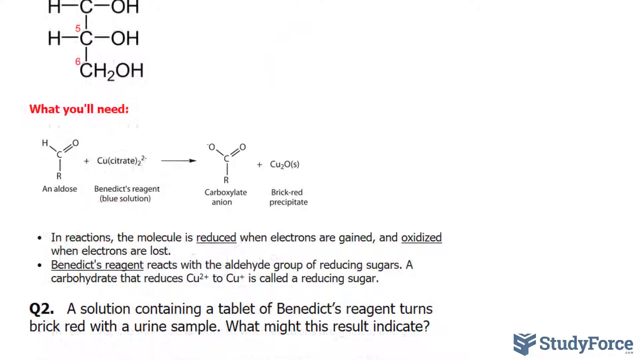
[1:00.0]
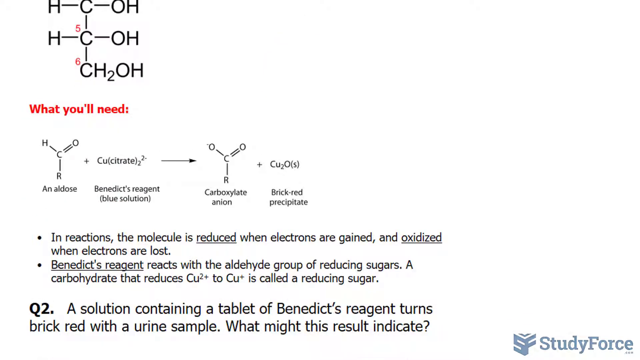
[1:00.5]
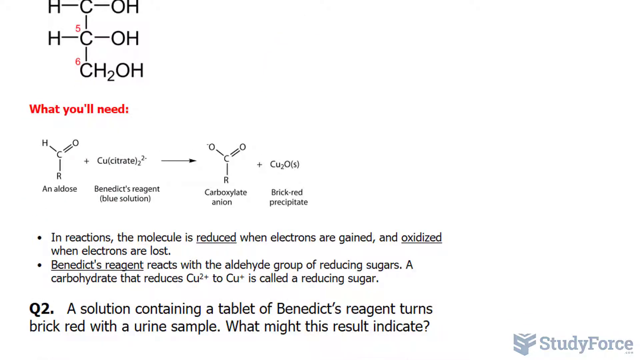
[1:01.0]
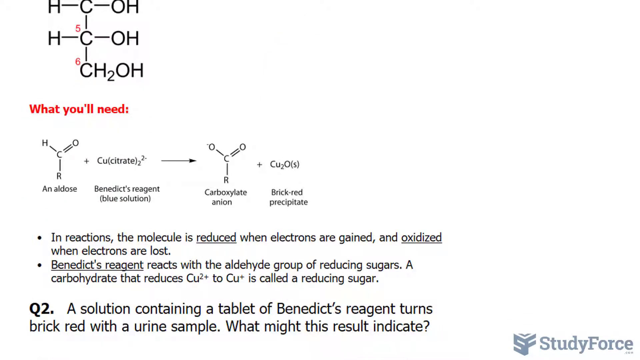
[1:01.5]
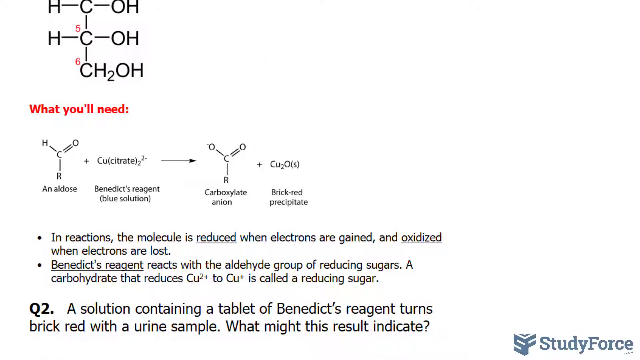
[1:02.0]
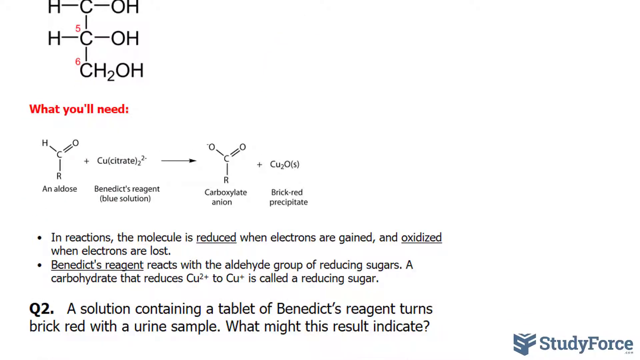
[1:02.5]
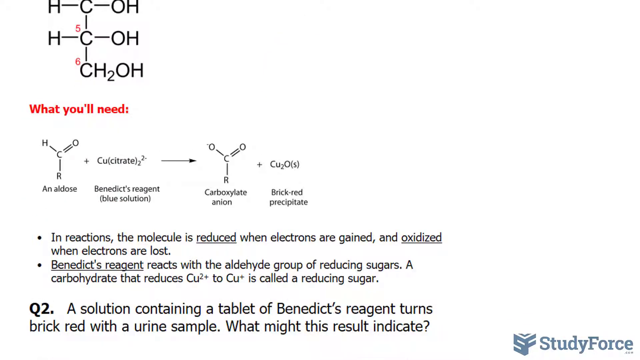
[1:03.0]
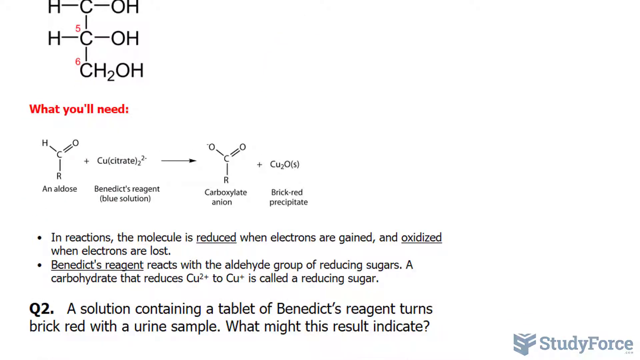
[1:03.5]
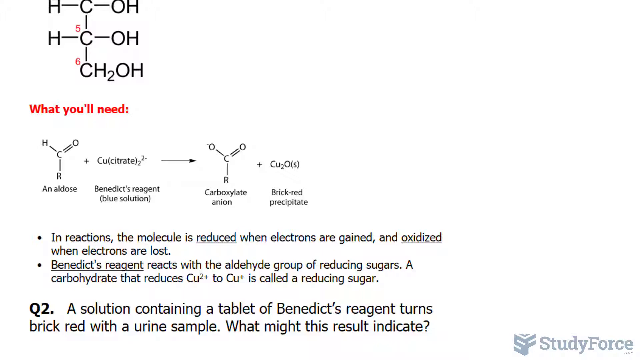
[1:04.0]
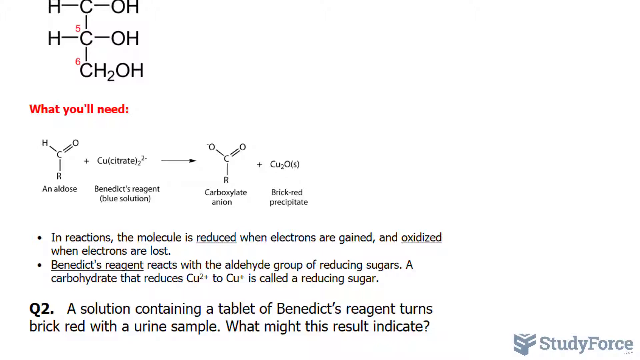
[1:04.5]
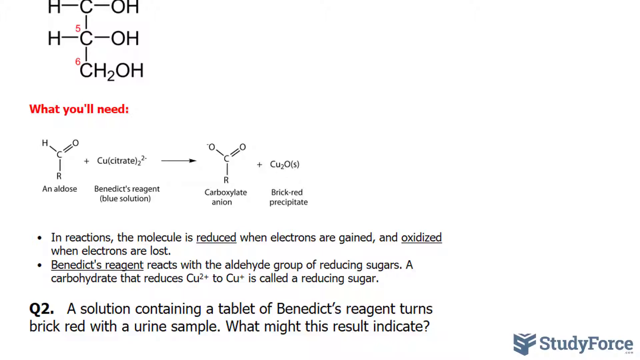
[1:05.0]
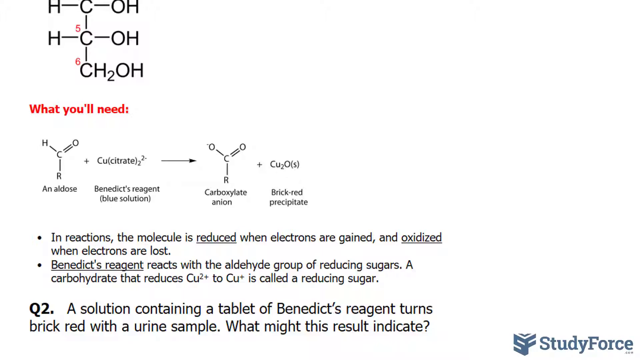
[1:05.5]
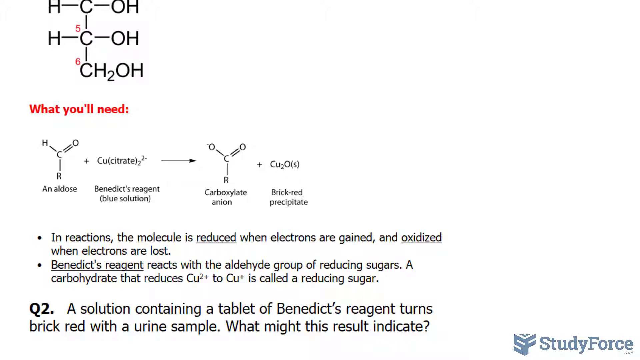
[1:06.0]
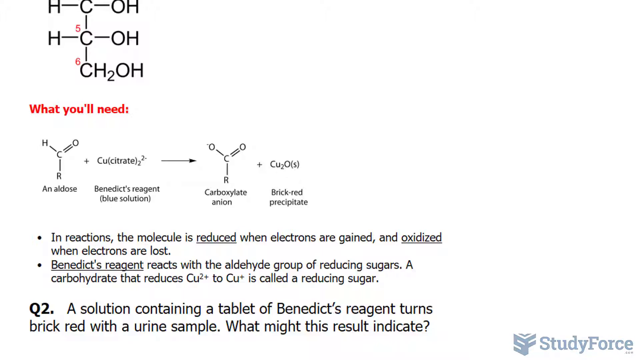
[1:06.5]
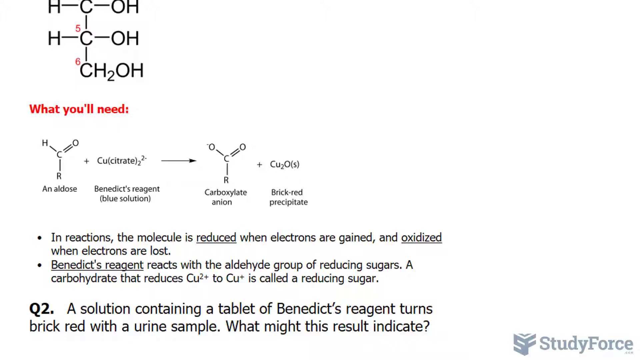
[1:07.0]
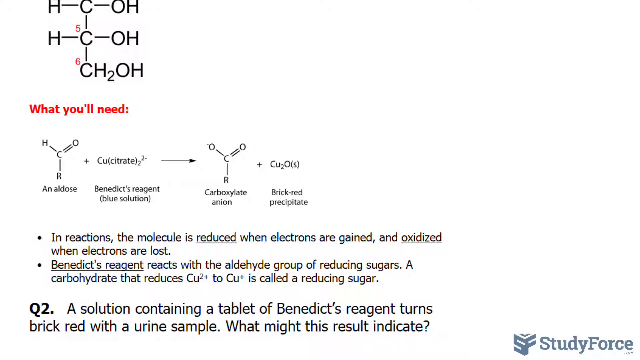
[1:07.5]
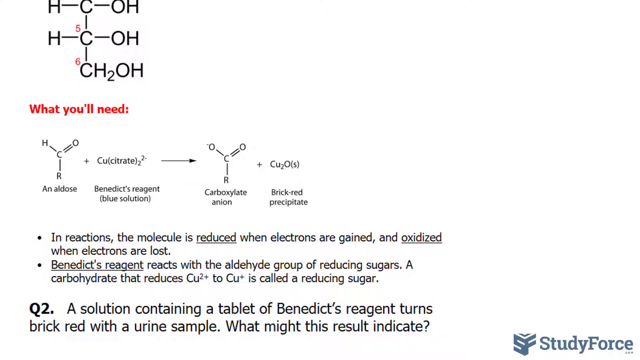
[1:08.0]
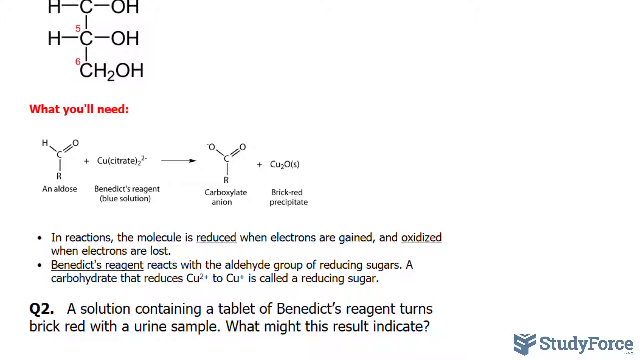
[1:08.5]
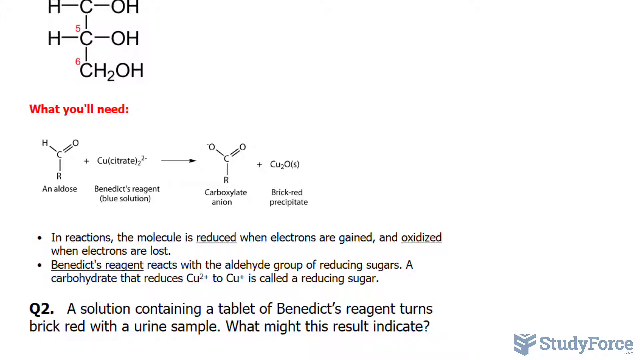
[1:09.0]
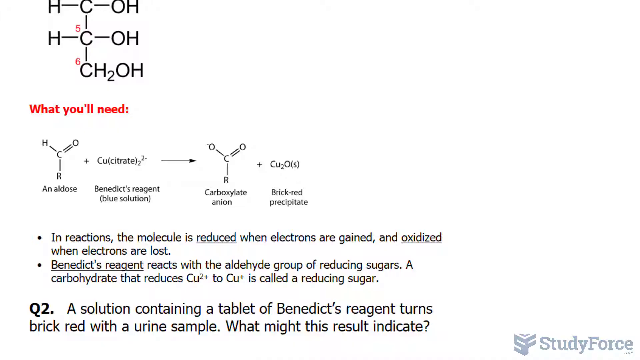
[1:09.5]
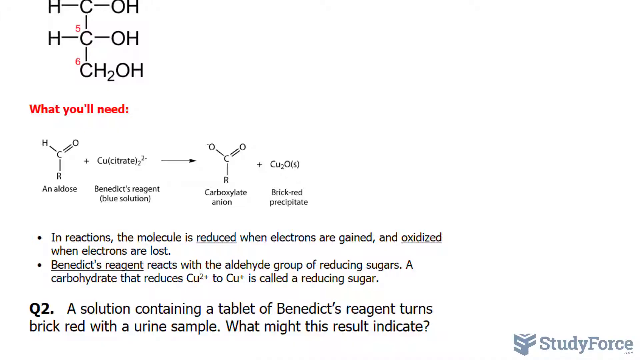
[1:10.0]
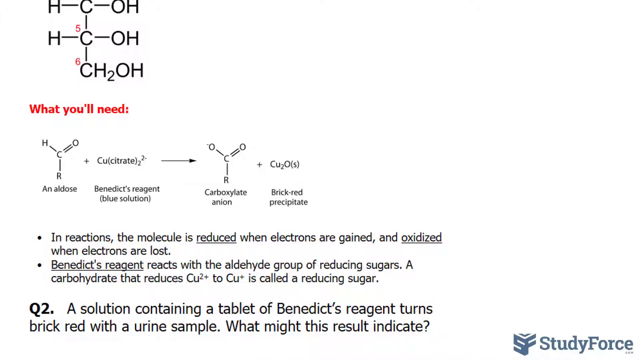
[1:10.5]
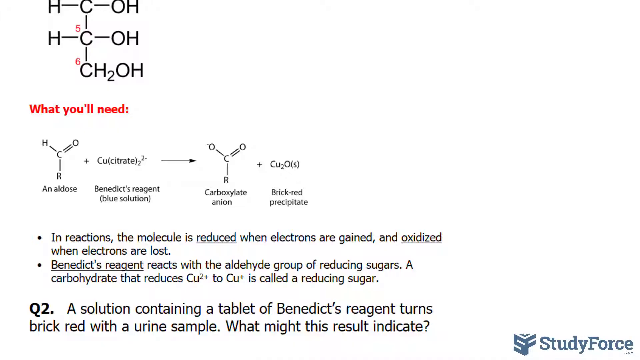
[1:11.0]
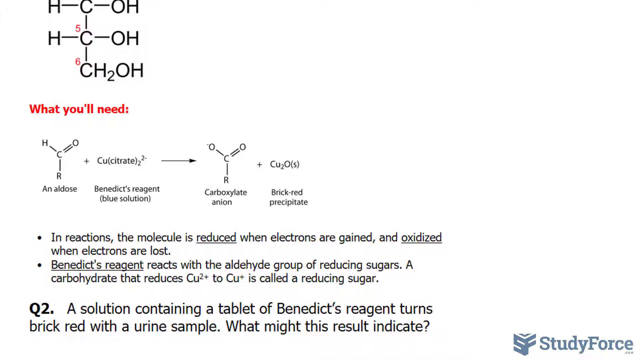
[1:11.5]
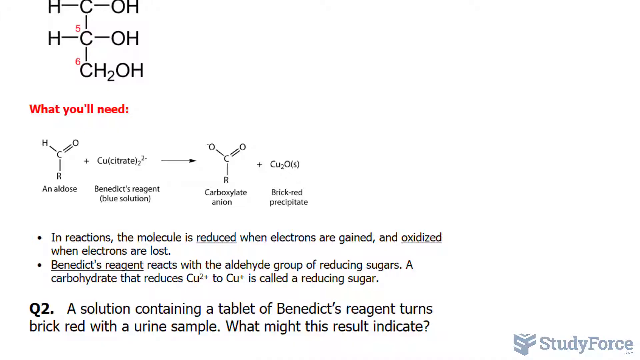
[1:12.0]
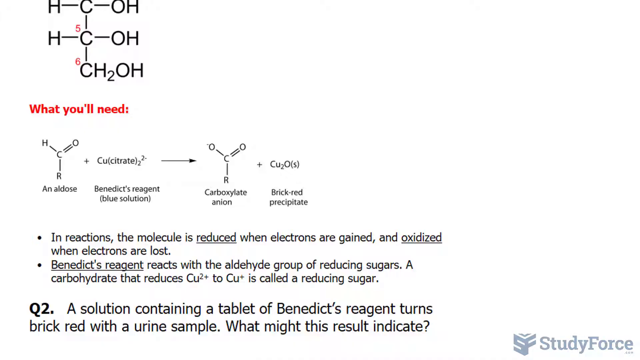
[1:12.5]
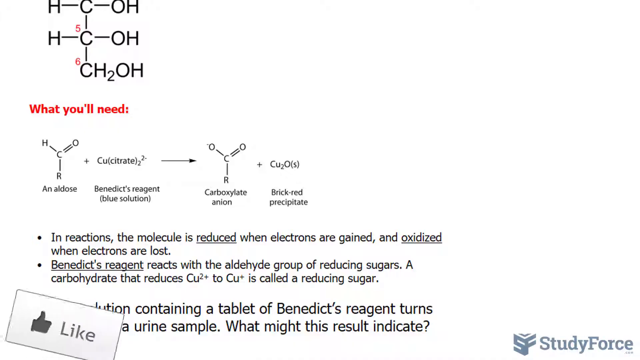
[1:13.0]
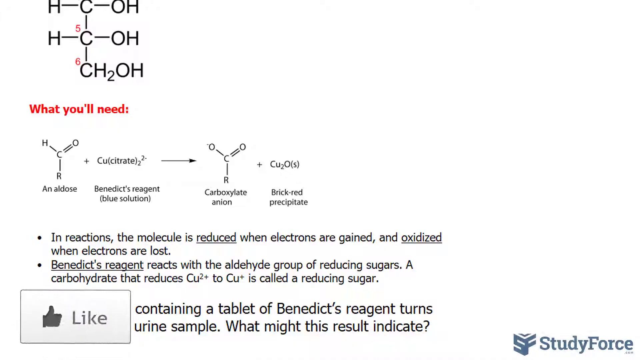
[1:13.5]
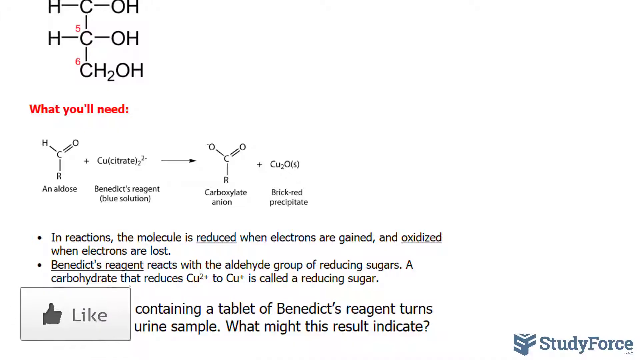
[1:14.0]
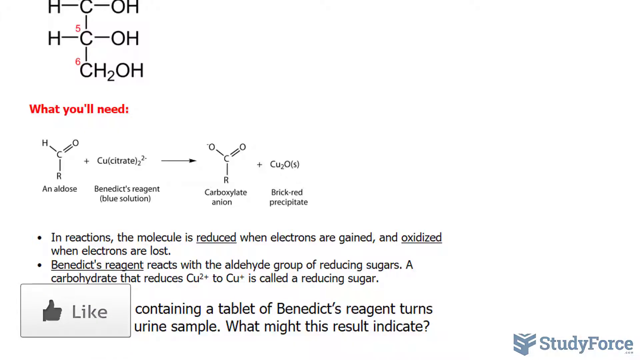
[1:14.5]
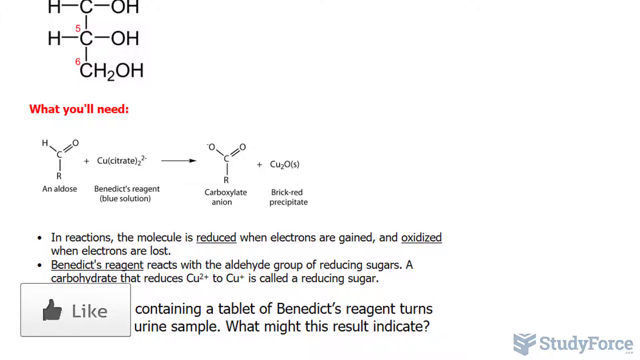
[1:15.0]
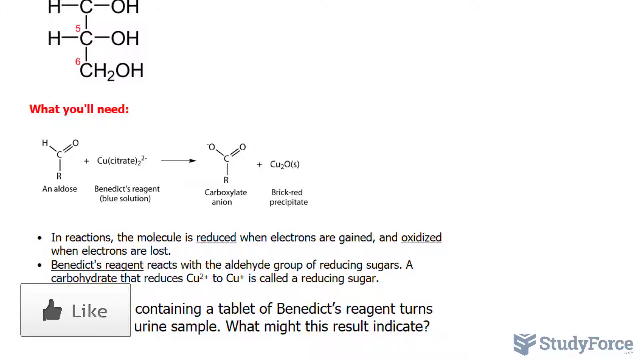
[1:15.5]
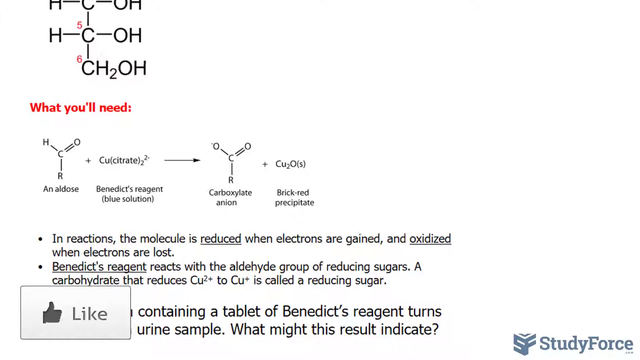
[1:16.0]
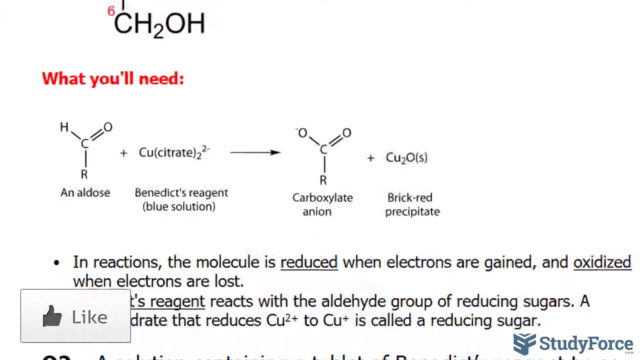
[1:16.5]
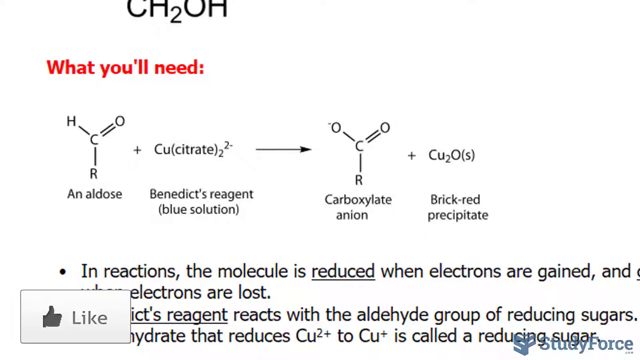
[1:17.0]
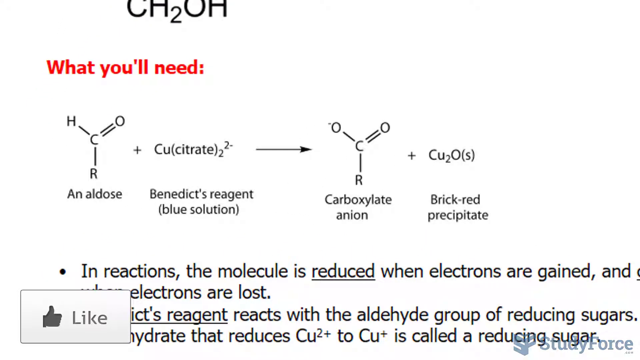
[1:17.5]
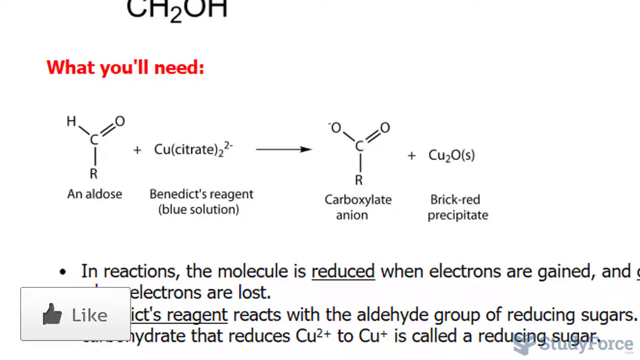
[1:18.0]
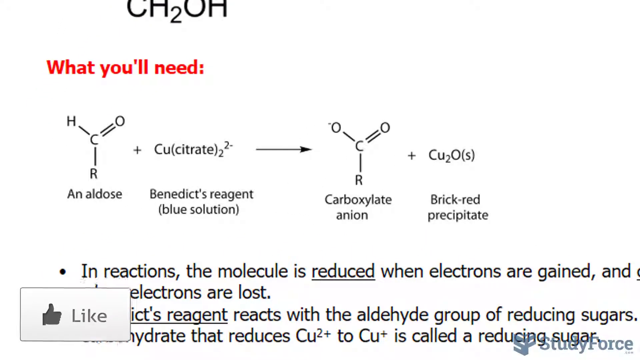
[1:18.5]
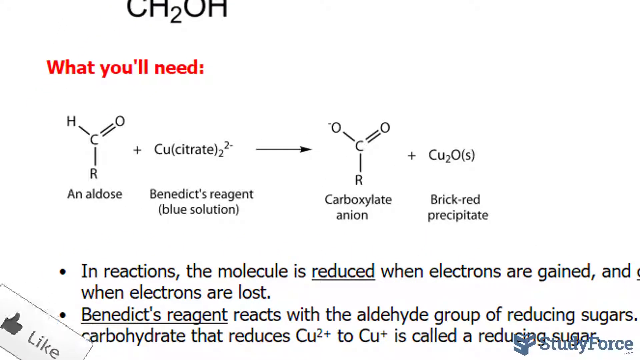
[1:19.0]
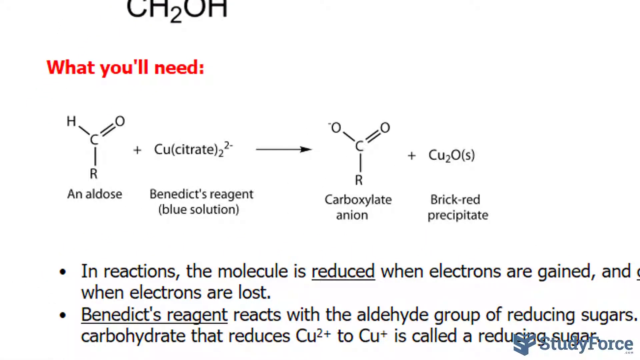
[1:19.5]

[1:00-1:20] The "what you need" page appears on a white background, showing a chemical equation in which an aldose plus Benedict's reagent gives a carboxylate anion and brick red precipitate. An explanation follows: "In reactions, the molecule is reduced when electrons are gained and oxidized when electrons are lost," and text stating that a carbohydrate that reduces Cu2+ to Cu+ is called a reducing sugar. Question 2 then appears: "A solution containing a tablet of Benedict's reagents turns red brick with a urine sample. What might this result indicate?" It is on a white screen and seems educational. A like button pops up beside the question, and the view zooms in on Benedict's reagent, carboxylate anion, brick red precipitates and aldose, highlighting Benedict's reagent.